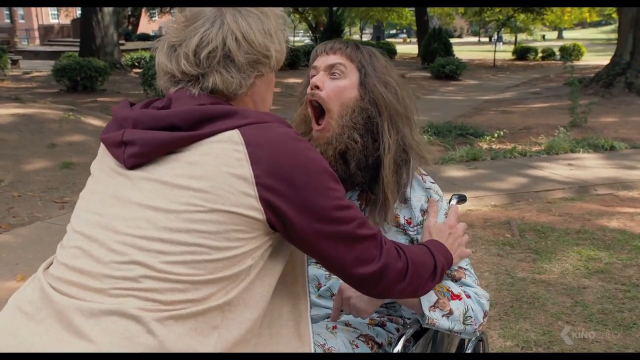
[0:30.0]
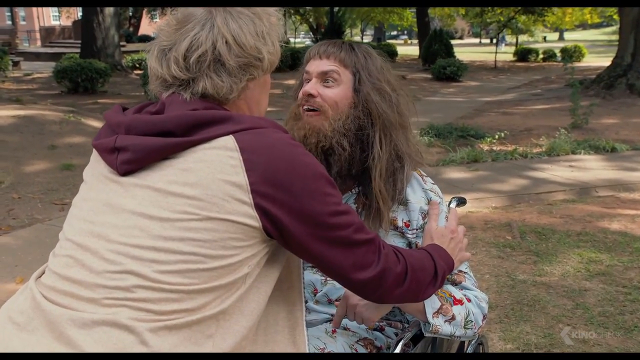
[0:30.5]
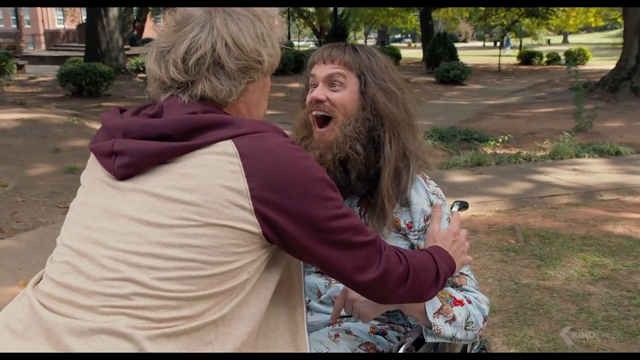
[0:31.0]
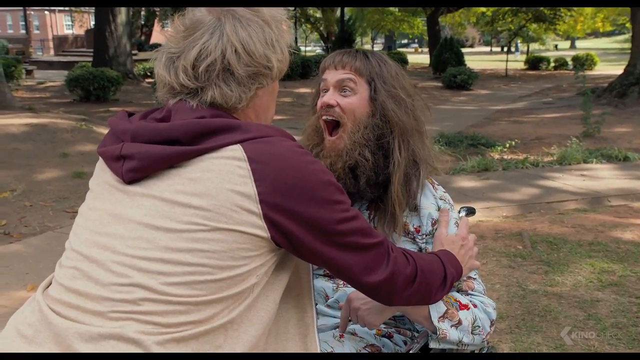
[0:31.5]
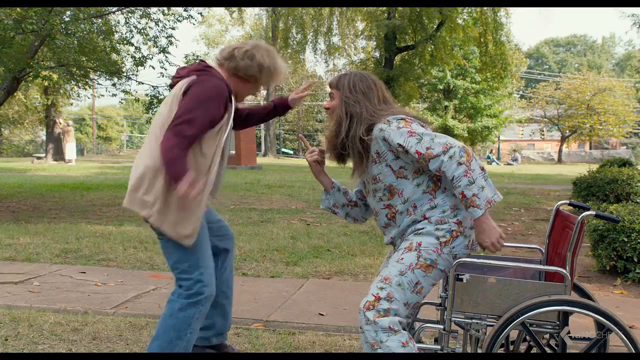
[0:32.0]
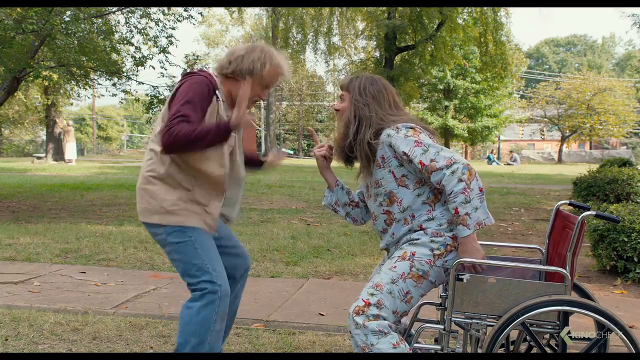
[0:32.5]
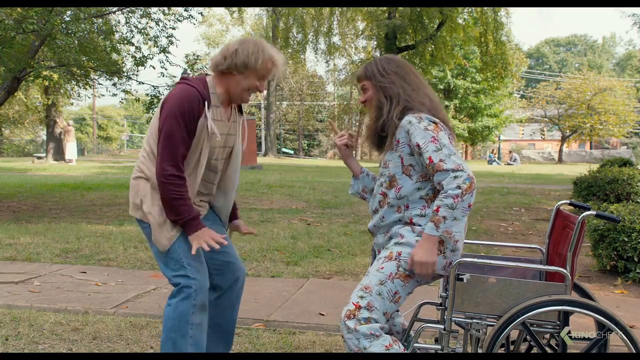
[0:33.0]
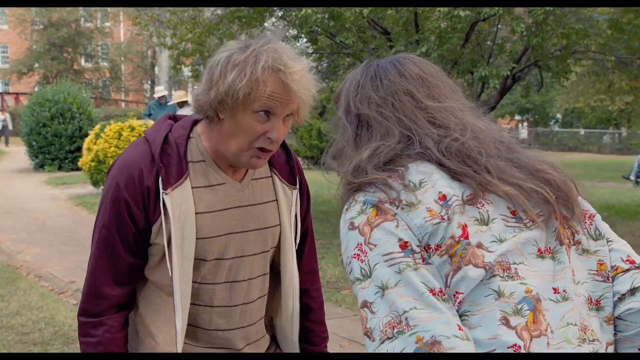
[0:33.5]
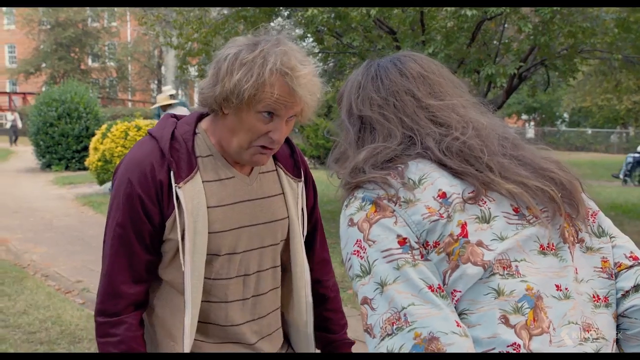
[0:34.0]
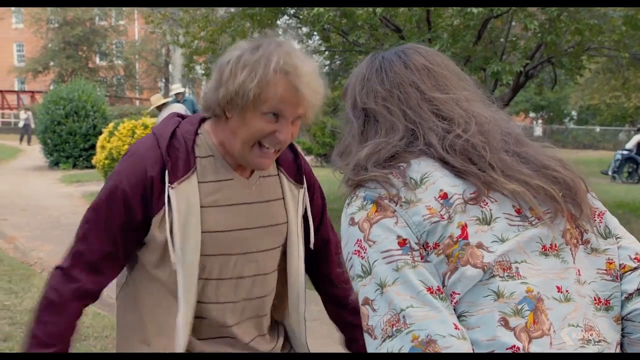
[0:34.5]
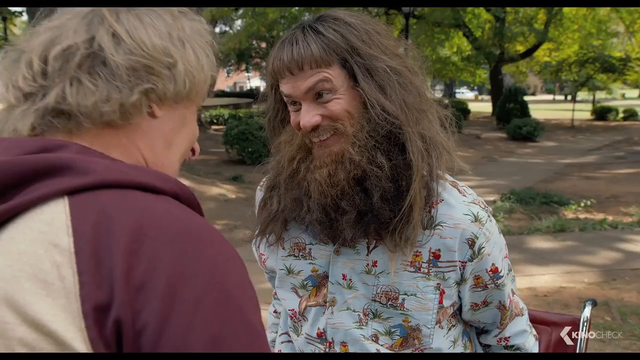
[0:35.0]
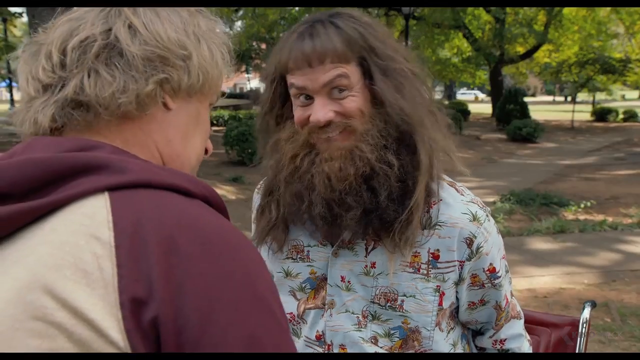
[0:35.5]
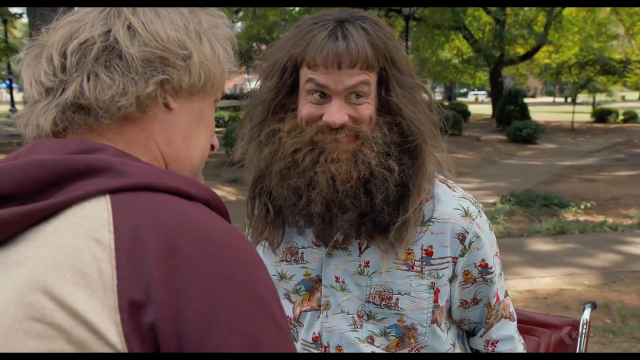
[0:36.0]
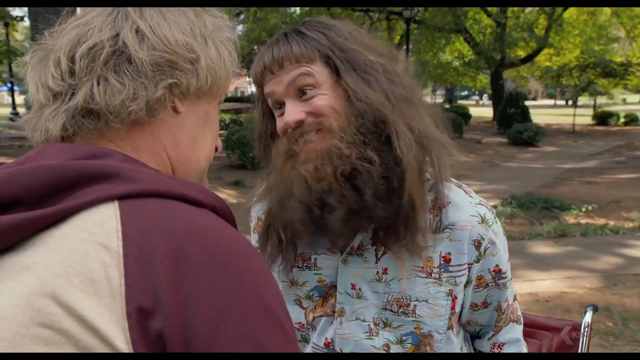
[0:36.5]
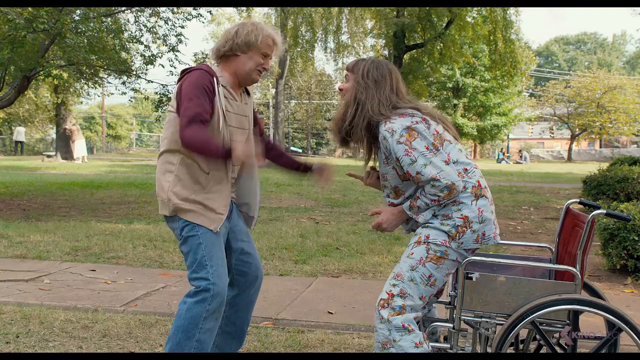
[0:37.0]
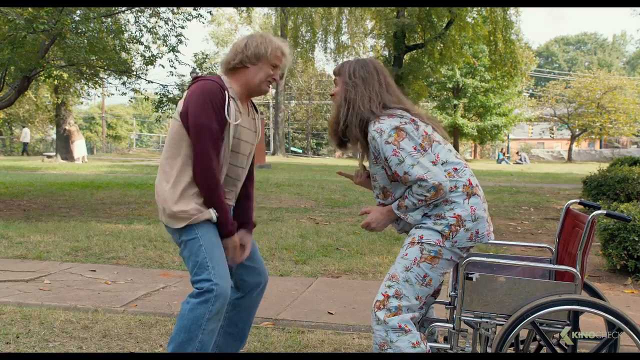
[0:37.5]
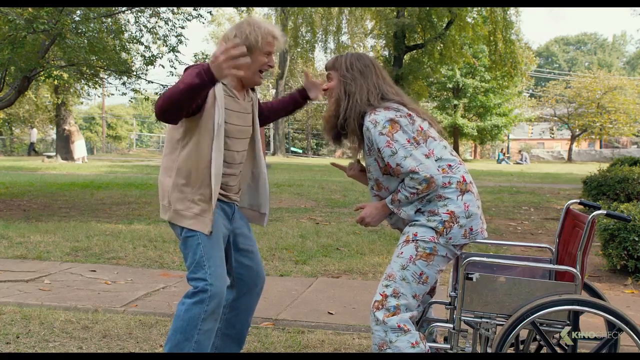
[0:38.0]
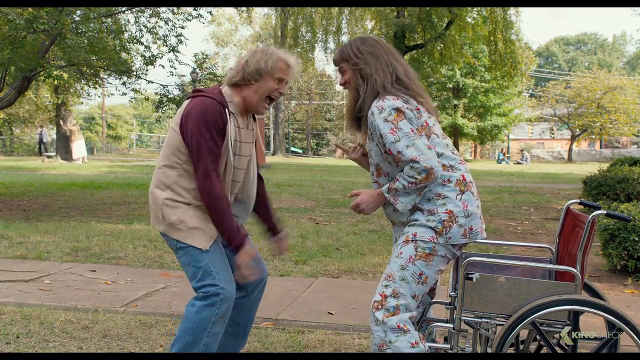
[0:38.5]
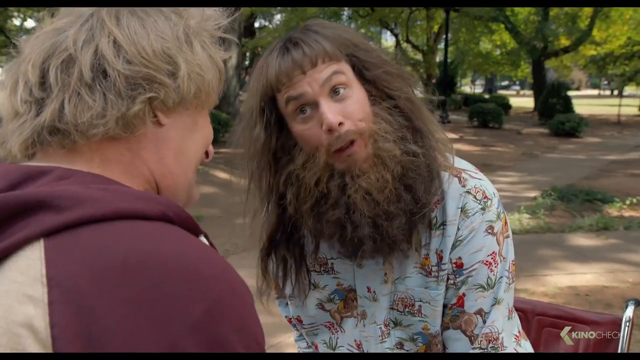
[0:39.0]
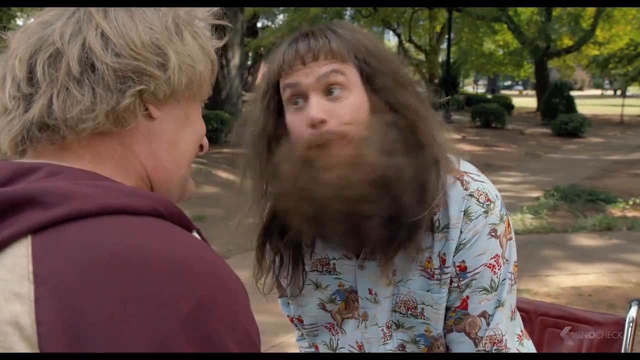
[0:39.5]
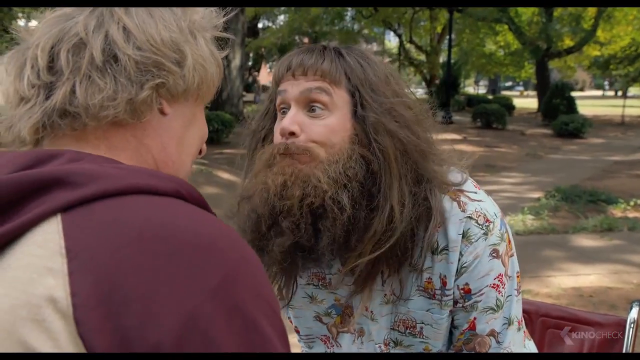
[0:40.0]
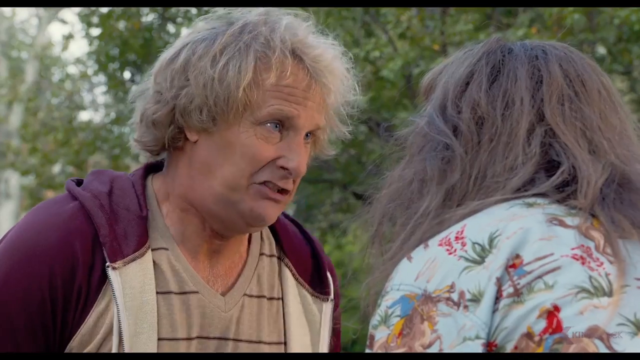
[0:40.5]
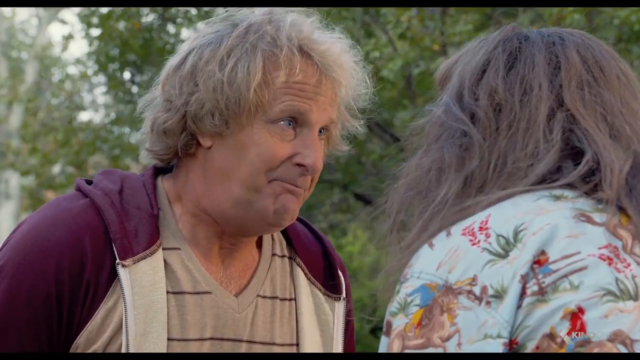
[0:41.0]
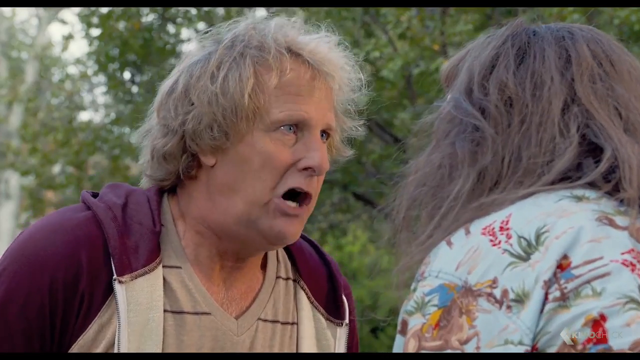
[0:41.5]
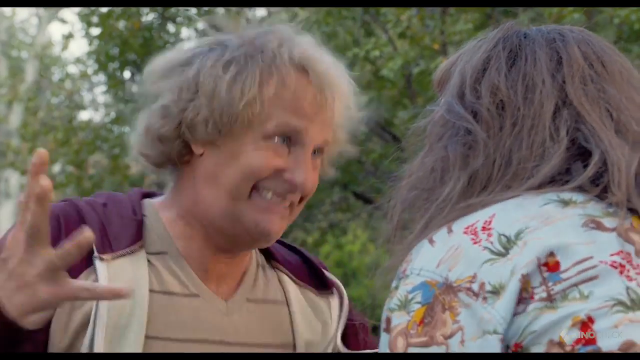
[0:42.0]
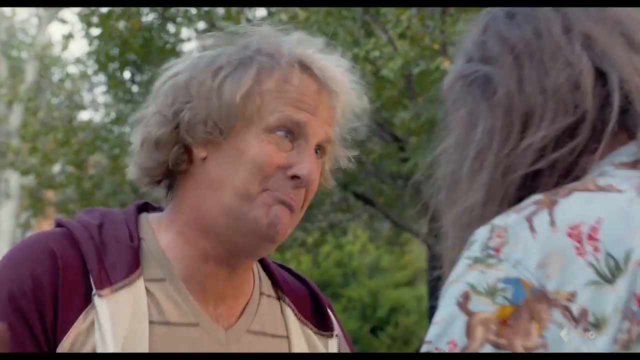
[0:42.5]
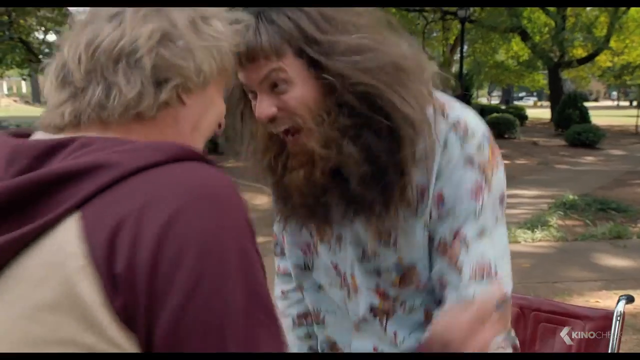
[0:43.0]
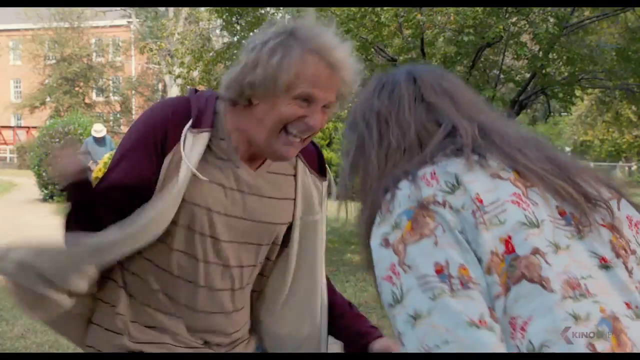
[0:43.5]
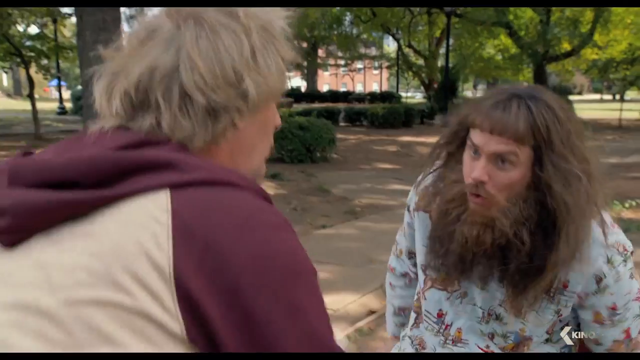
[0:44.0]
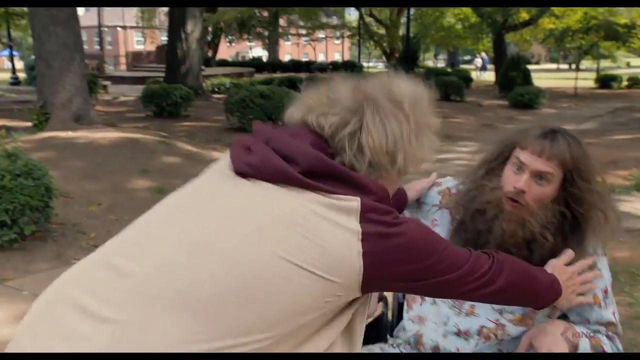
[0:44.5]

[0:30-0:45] After the screaming, the bearded man starts laughing and stands up, suggesting the wheelchair might be fake. The two men laugh and gesture to each other, making very wild facial expressions, very excited and jumping up and down, talking back and forth. Suddenly the Jim Carrey character falls back into the wheelchair. They seem to be old friends having fun.